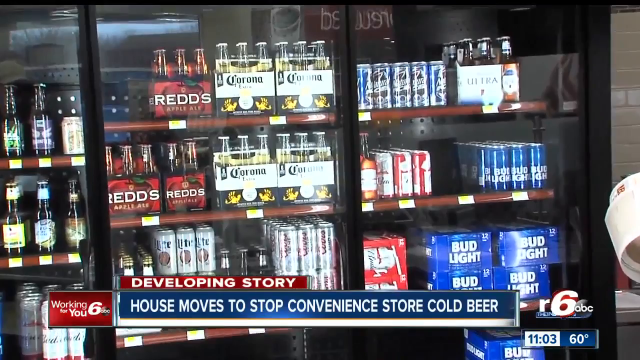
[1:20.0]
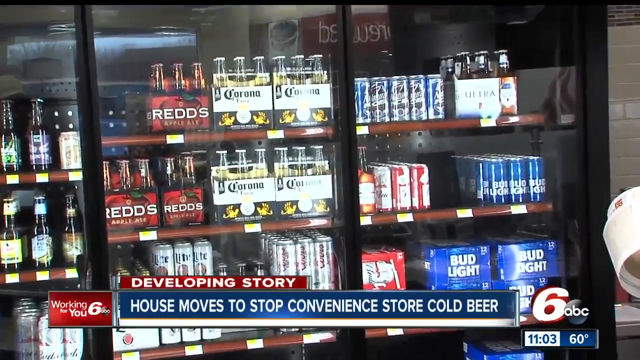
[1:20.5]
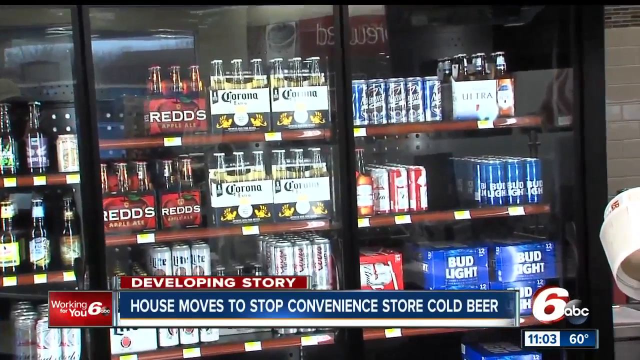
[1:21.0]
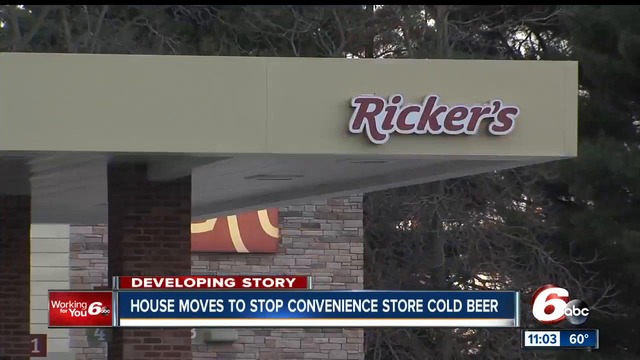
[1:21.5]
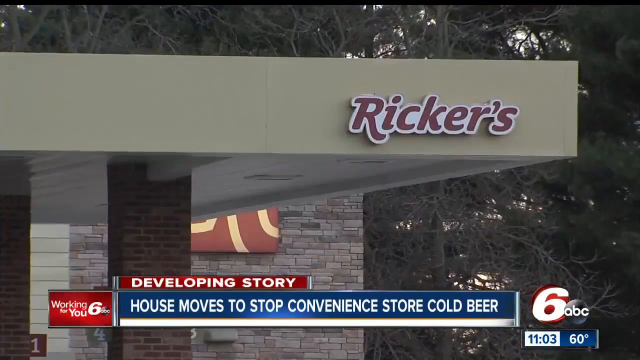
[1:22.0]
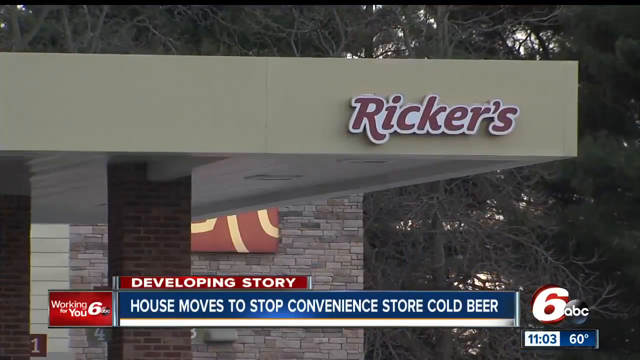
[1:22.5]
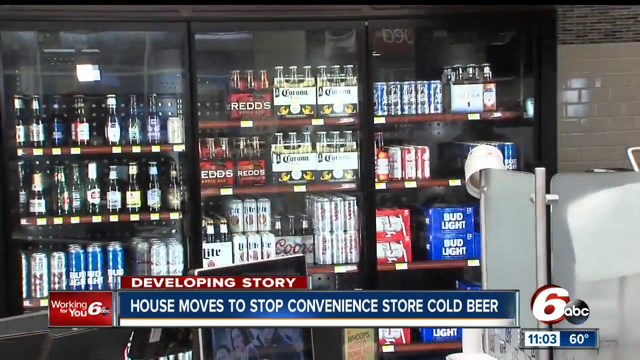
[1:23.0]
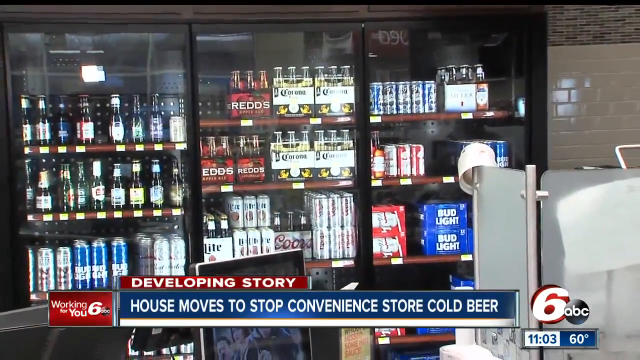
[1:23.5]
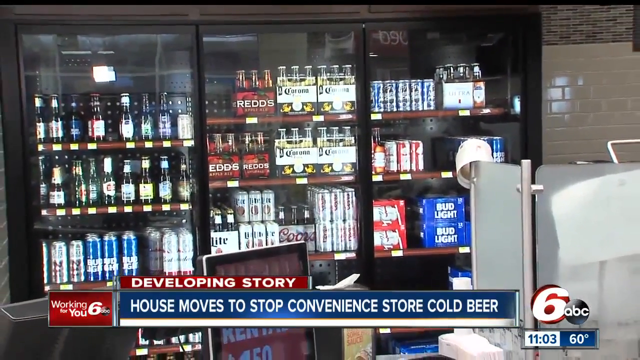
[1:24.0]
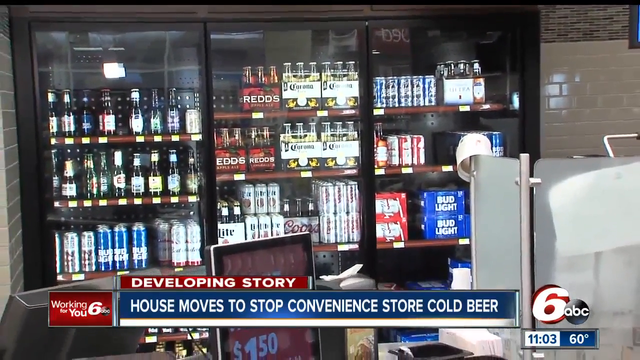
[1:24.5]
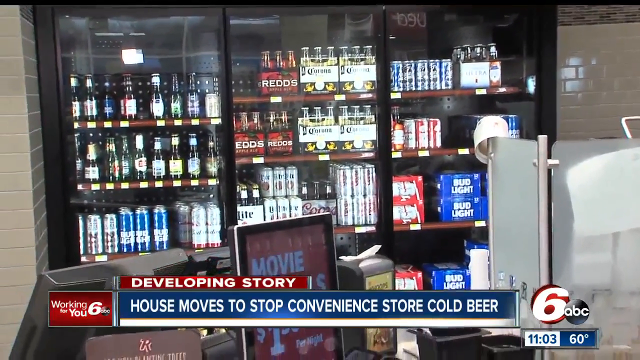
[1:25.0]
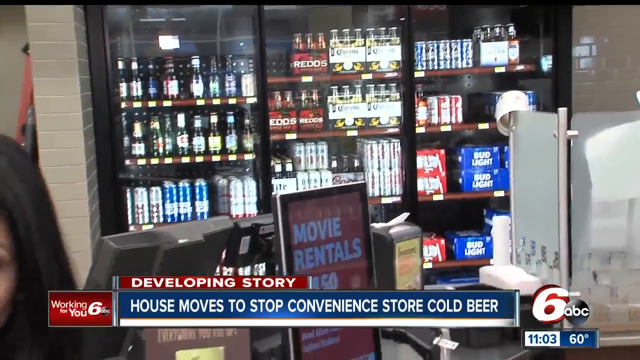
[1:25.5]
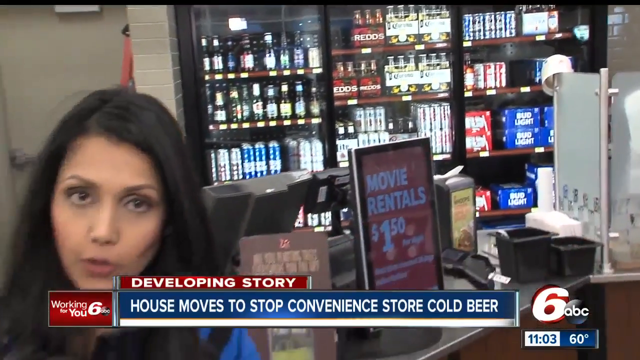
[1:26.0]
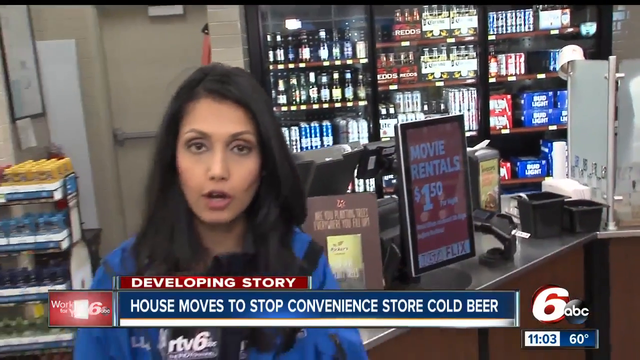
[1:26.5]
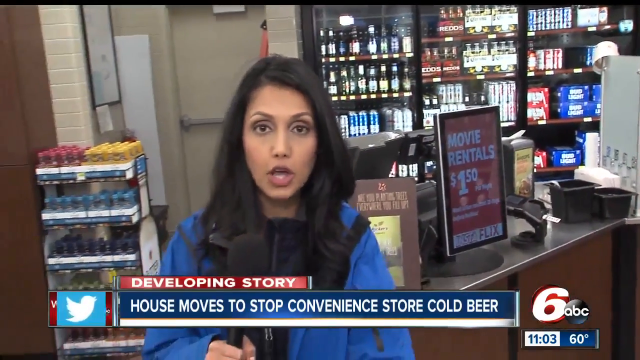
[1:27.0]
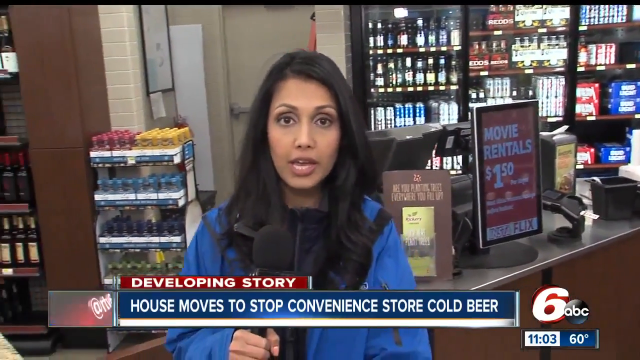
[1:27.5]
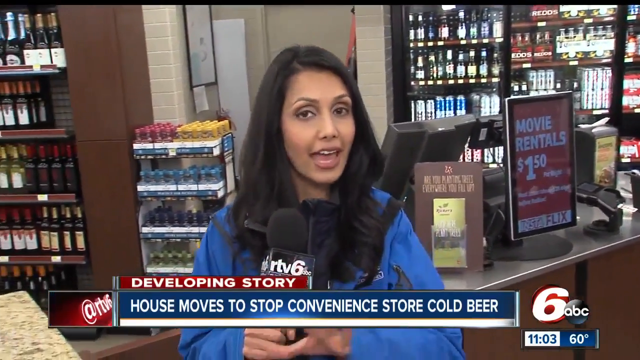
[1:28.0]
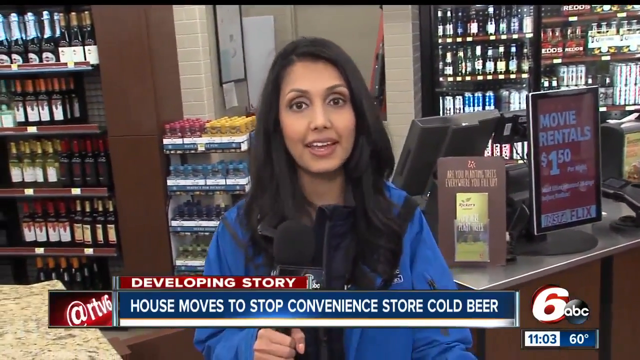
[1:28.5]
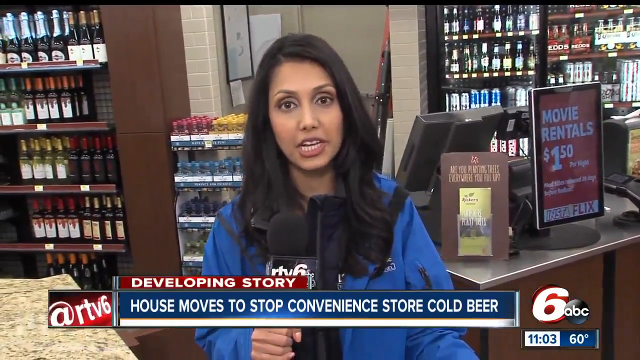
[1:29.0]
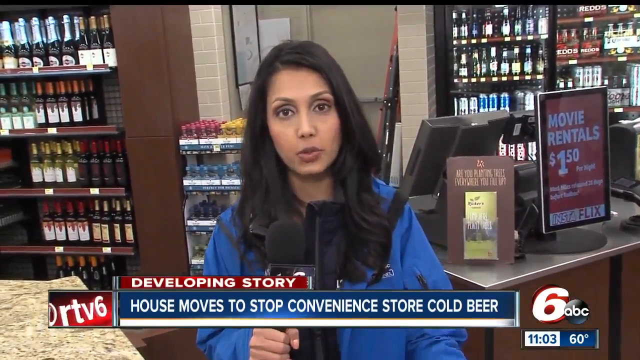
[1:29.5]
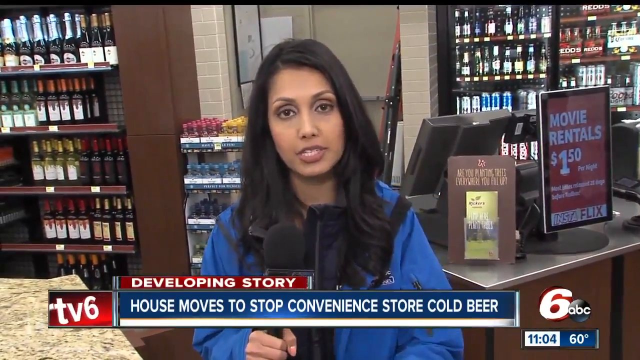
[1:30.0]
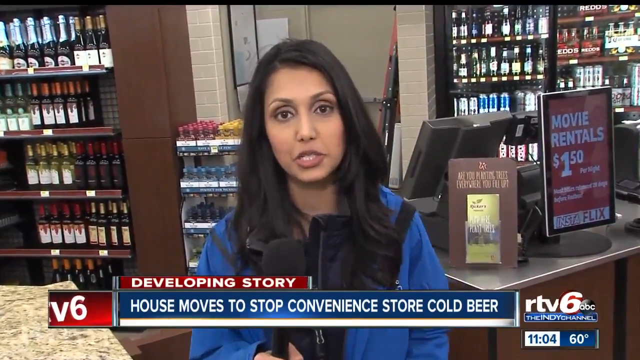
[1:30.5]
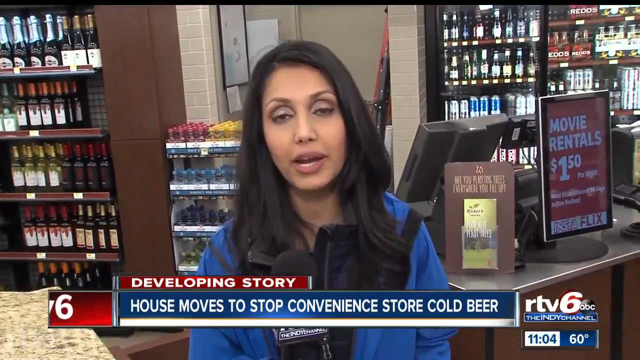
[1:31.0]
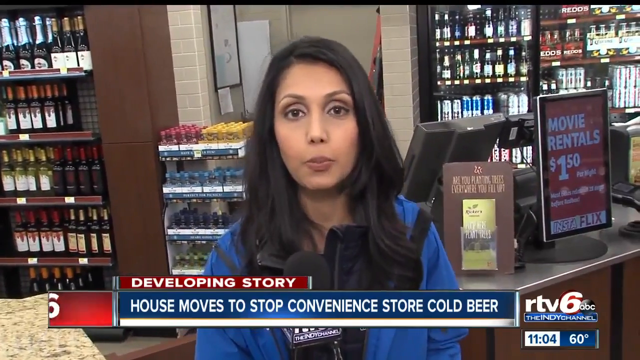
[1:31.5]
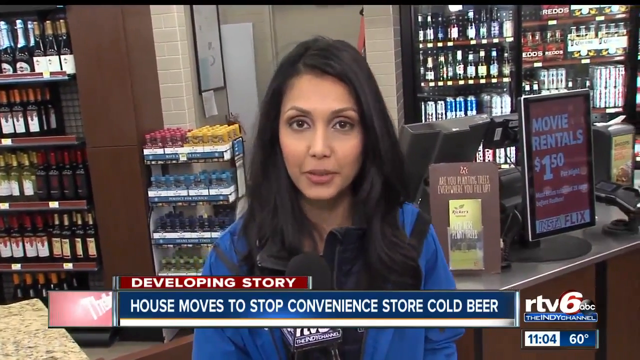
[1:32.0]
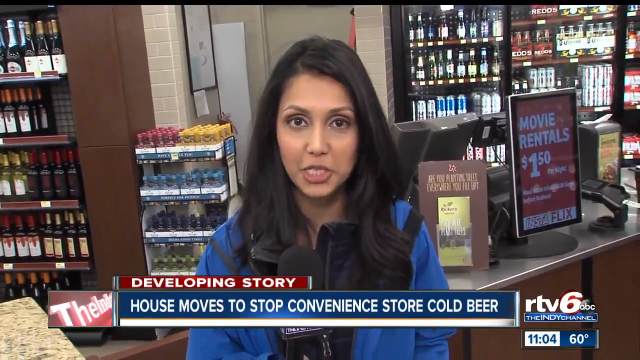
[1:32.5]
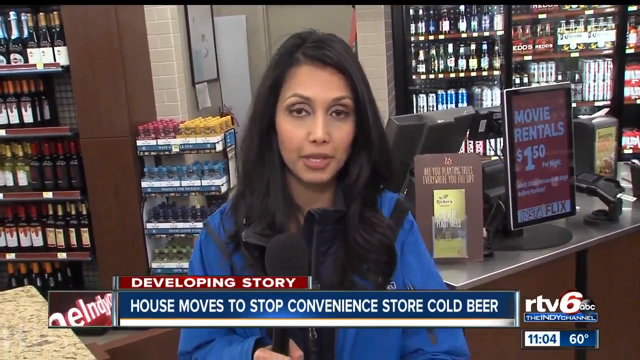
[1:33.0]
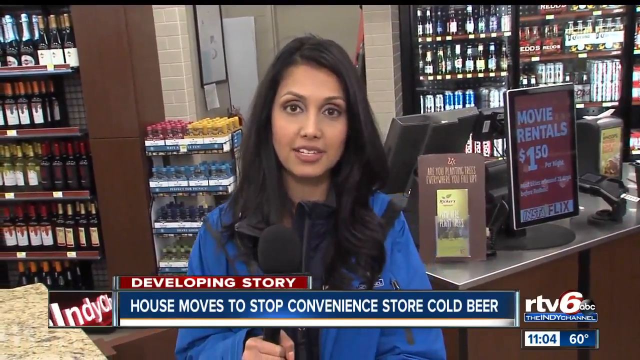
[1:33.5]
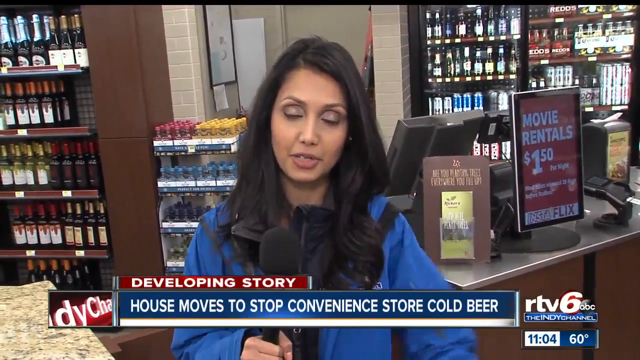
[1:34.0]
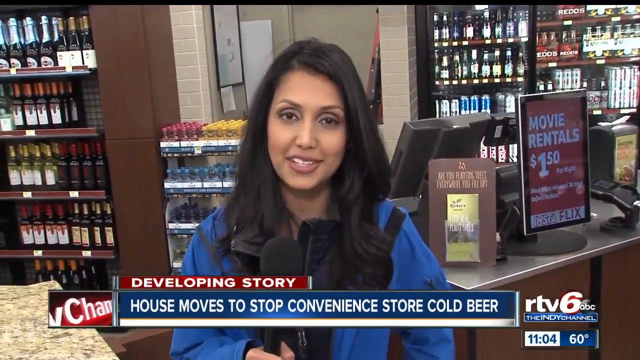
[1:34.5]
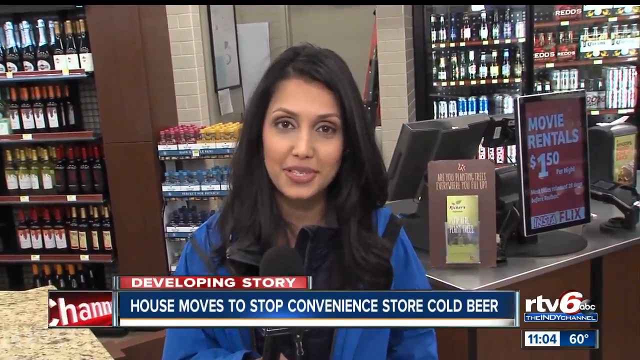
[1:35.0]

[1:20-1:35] The inside of the Rikers store is shown, with its collection of alcohol and beers and the Rikers sign. The beers include Corona, Reds and Bud Light, some in cans, some in bottles and some packaged in boxes, forming a big collection. The woman presenting, still wearing blue, appears with the till and the beer collection in the background, along with text reading "movie rentals $1.50." The headline still reads "developing story" about the house moving to stop convenience store cold beer. The woman concludes the news, which is from RTV-6.